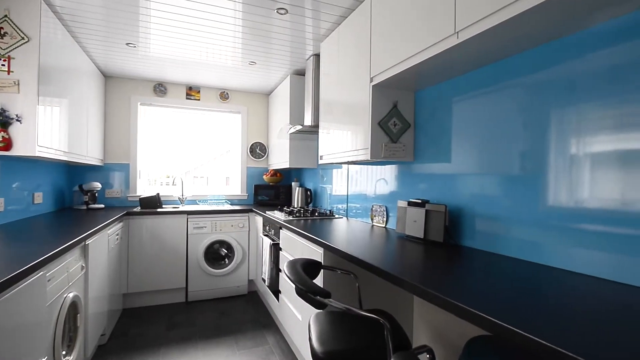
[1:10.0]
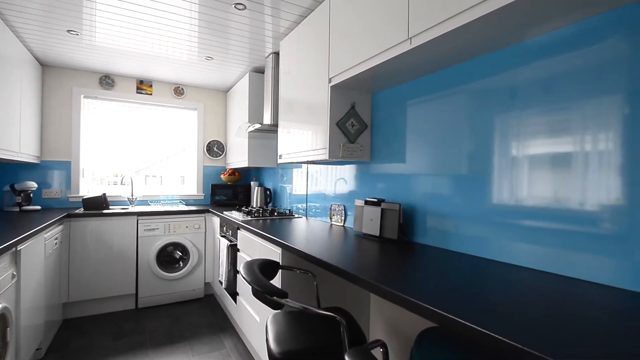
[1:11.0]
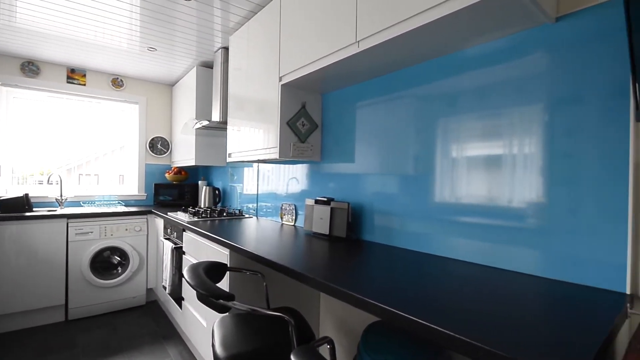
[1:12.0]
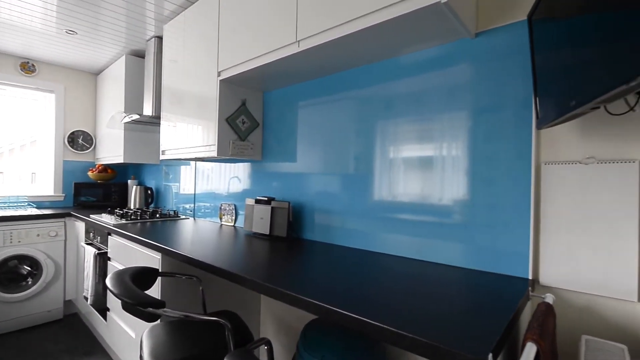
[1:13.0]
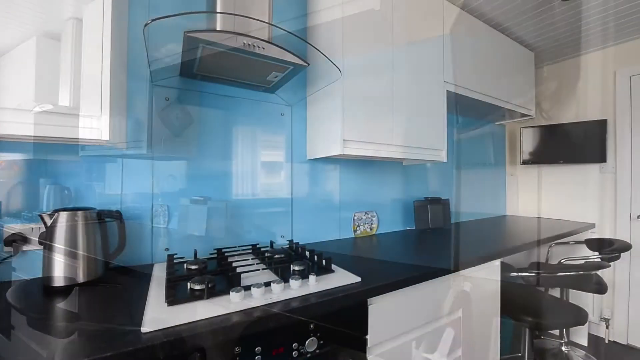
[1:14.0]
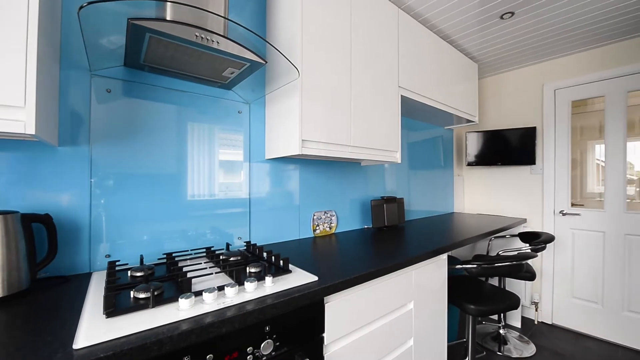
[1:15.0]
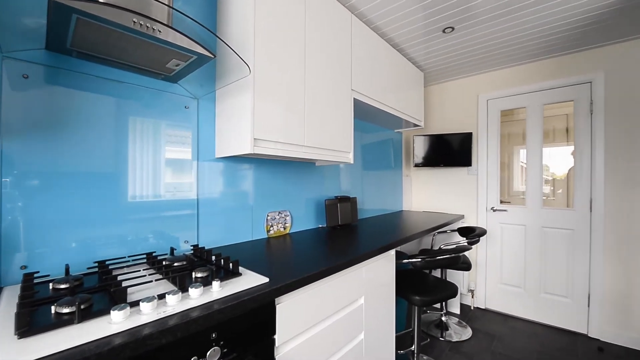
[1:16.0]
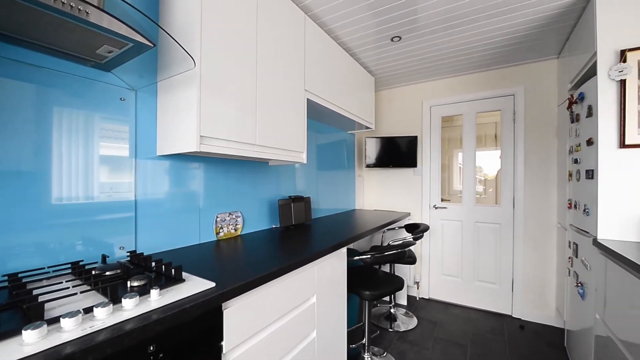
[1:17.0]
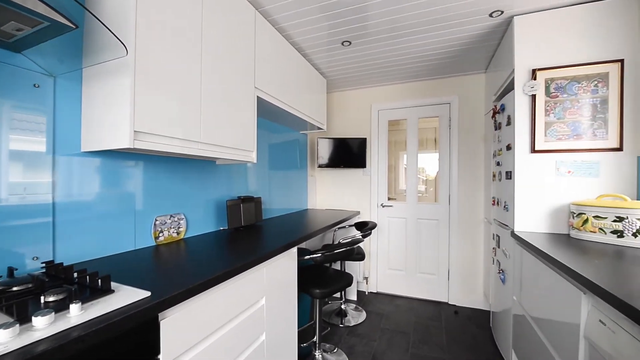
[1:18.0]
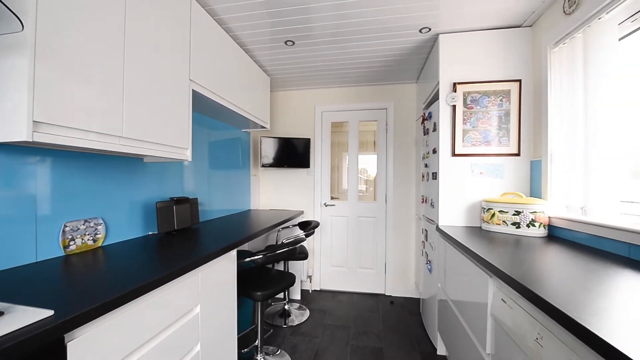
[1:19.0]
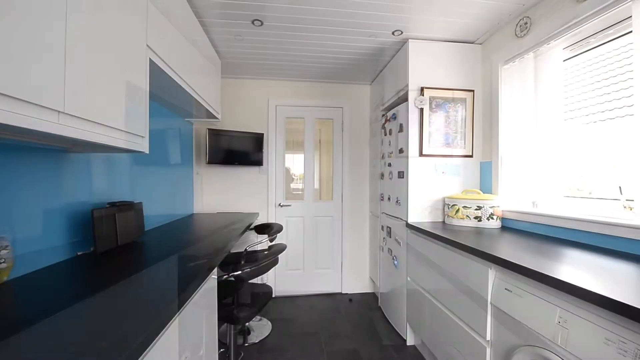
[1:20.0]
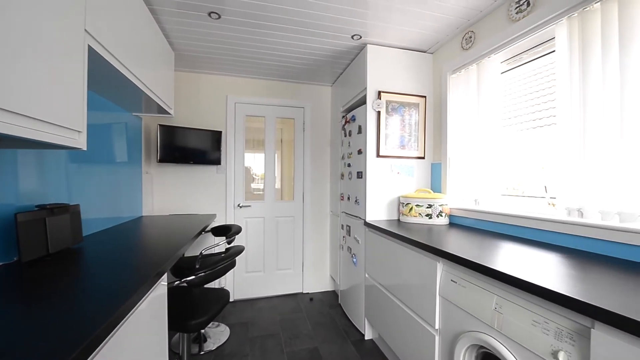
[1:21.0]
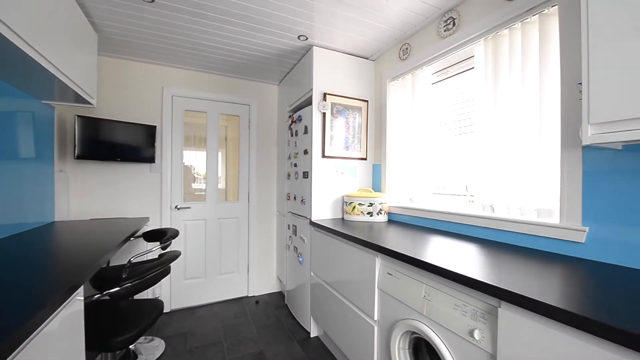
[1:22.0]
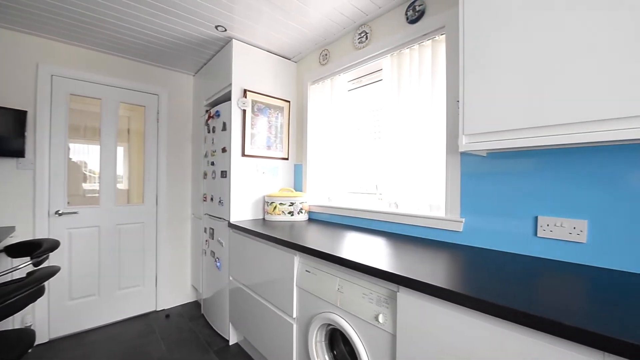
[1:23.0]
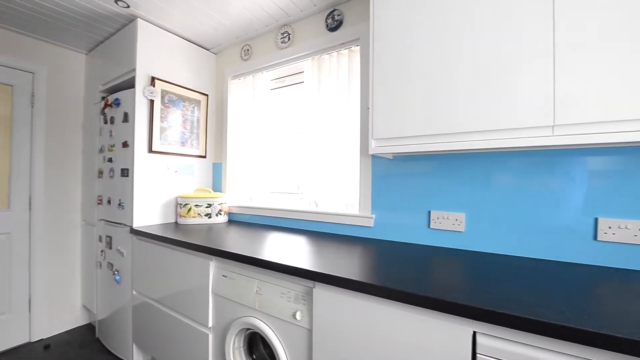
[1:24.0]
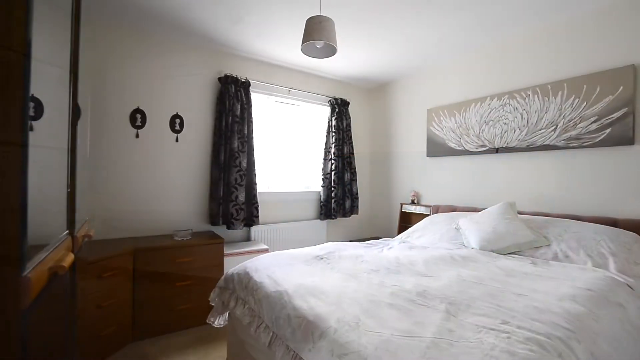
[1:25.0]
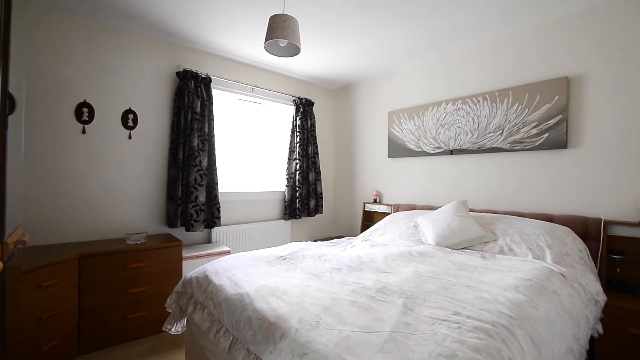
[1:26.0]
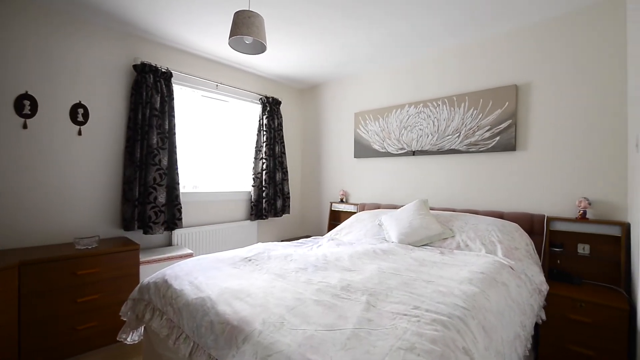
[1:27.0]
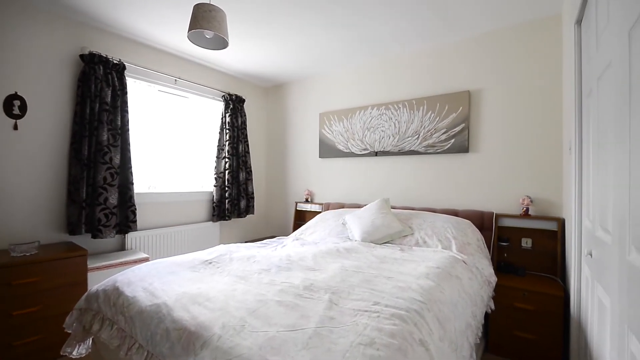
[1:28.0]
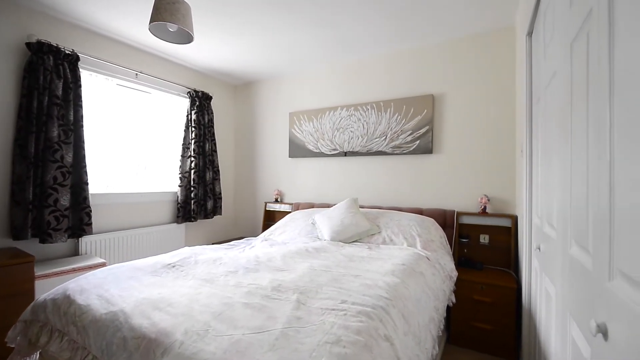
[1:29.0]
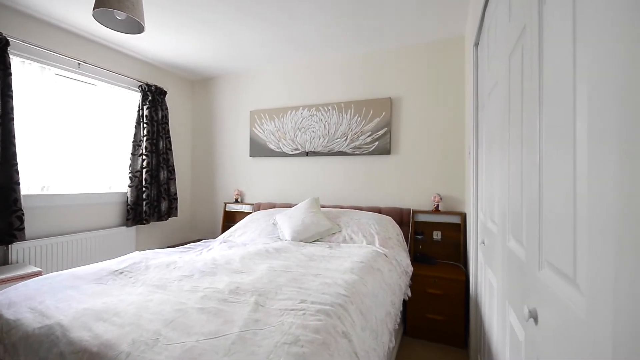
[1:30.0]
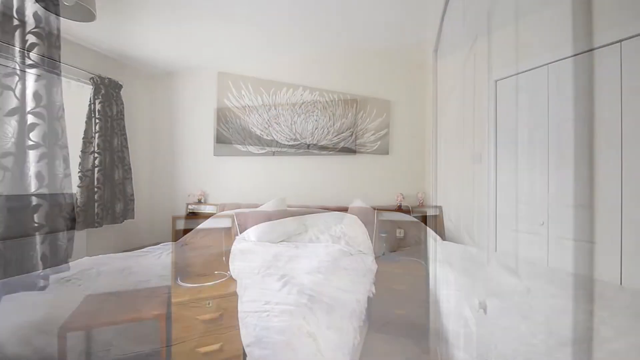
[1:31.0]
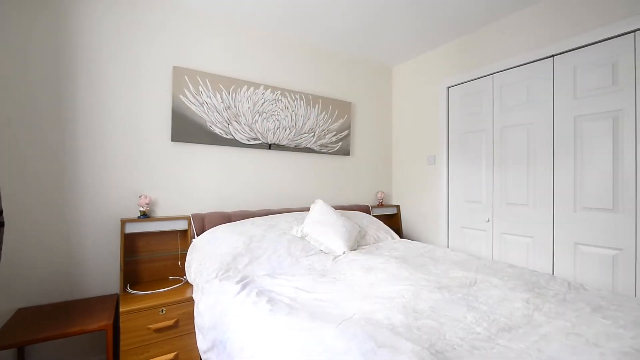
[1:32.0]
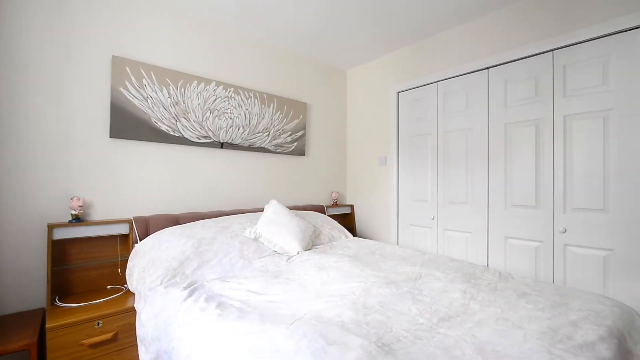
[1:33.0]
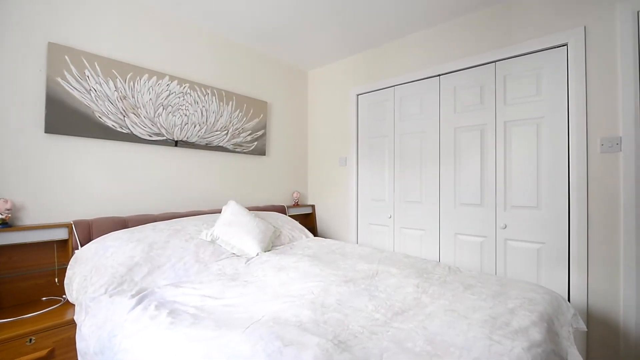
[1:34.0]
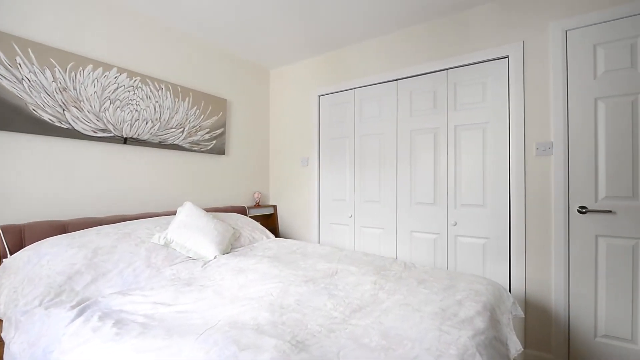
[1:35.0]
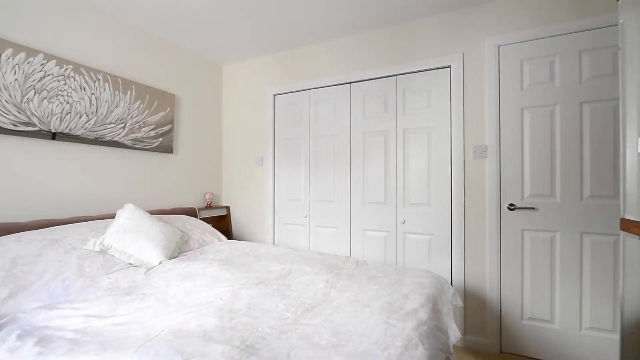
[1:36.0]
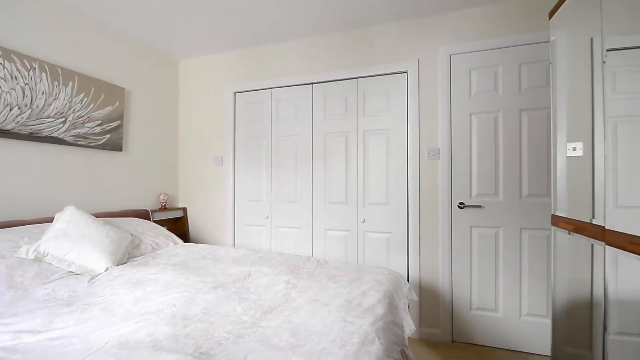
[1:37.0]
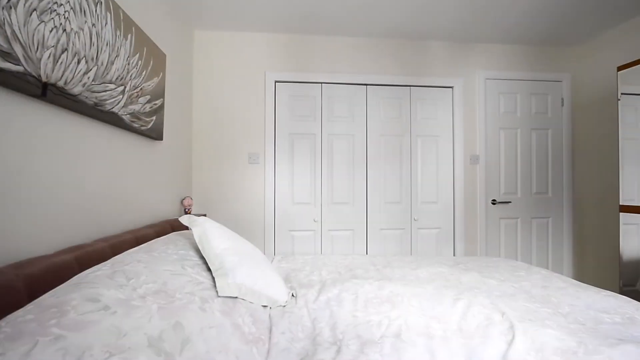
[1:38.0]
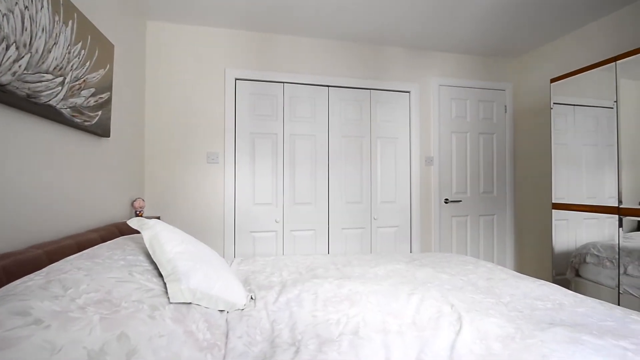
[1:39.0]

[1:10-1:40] A pan around the kitchen shows very strong blue walls and a clock on the wall that seems to say about twenty past twelve. There appears to be a mixer or a coffee machine in the distance, a kind of music player, kettles, a washing machine, possibly a dishwasher and a tumble dryer, and an oven and hob. White cabinets are on the walls, and the ceiling is a sort of wood or plastic cladding with small round lights in it. There is a small TV in the room, a breakfast bar, black worktops, a white hob and more white glazed doors. The room is somewhat L-shaped, with part of it blocked out in the corner, and there are a few pictures on the walls, an ornamental tray, and an ornamental item like a bread bin or something similar. A dissolve shows that the window has vertical blinds with some plates hanging above it, and there are a few white power sockets on the wall. The video then transitions to a bedroom with a double bed, a fancy illustration based on a flower on the wall, muted walls, a white ceiling, a single light fitting, white doors, daylight flooding in, and dark-coloured curtains. The double bed has one pillow on it, with cabinets on each side. A reverse shot shows four white doors, presumably wardrobe doors, and a white door presumably leading onto the landing.